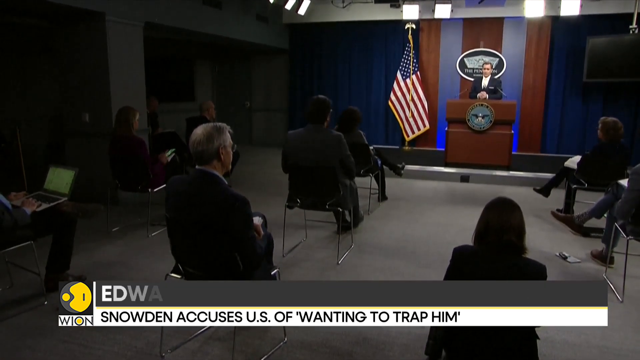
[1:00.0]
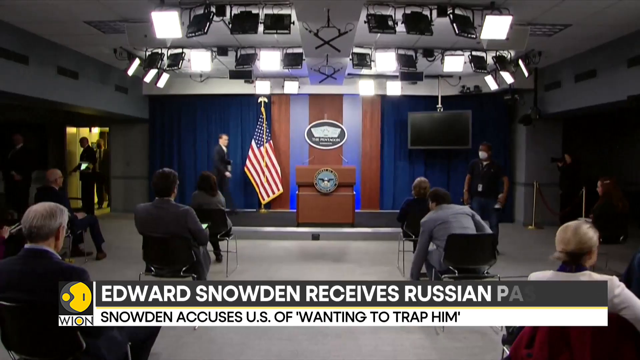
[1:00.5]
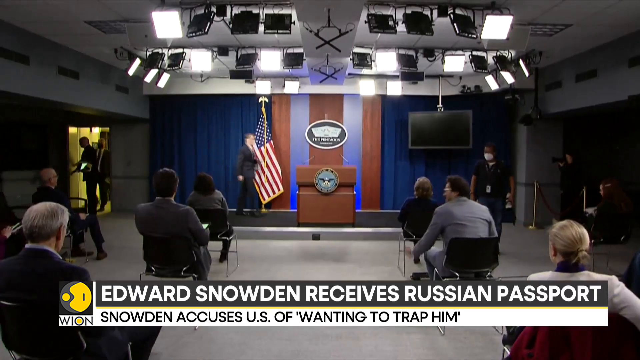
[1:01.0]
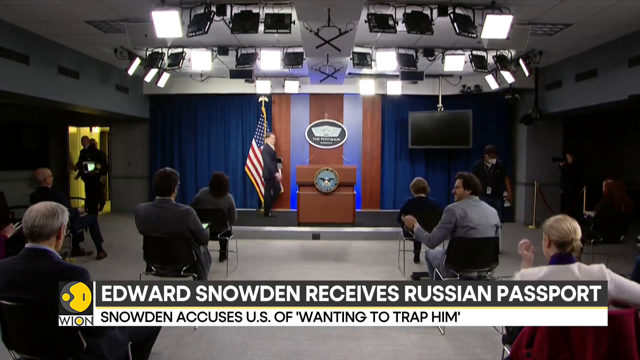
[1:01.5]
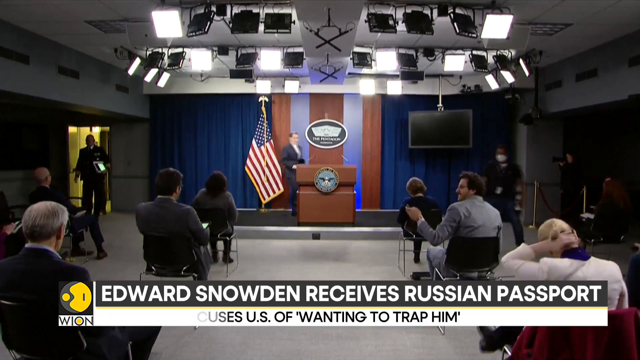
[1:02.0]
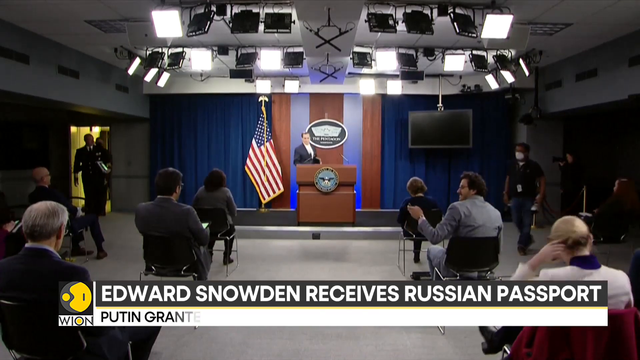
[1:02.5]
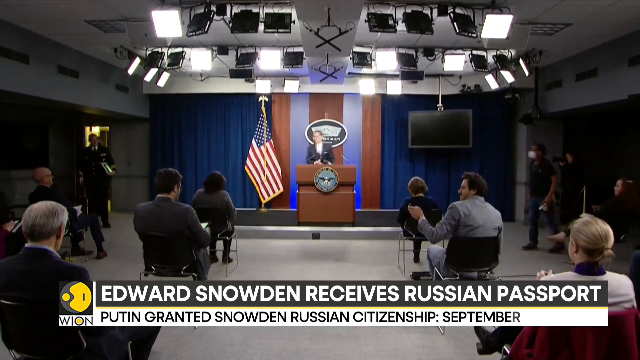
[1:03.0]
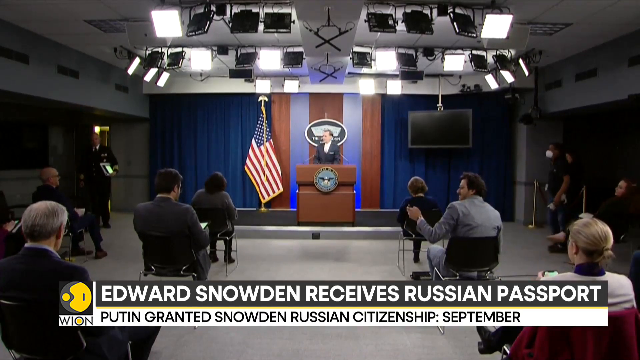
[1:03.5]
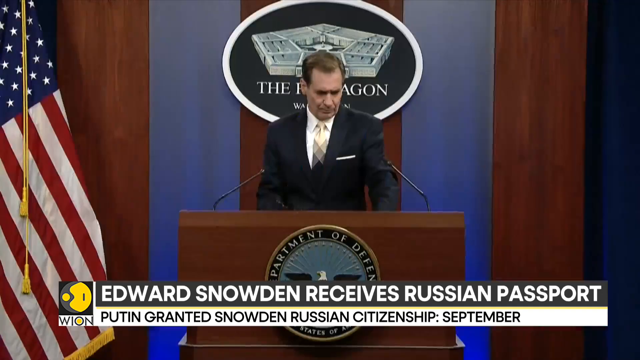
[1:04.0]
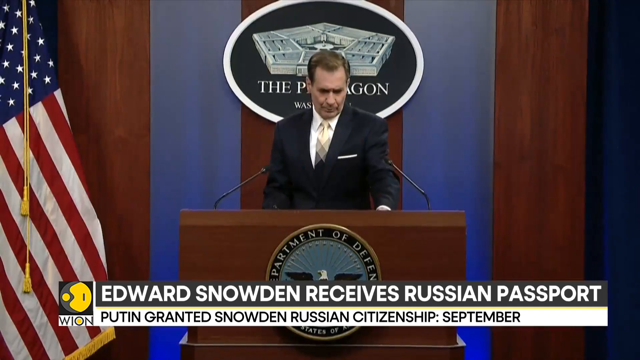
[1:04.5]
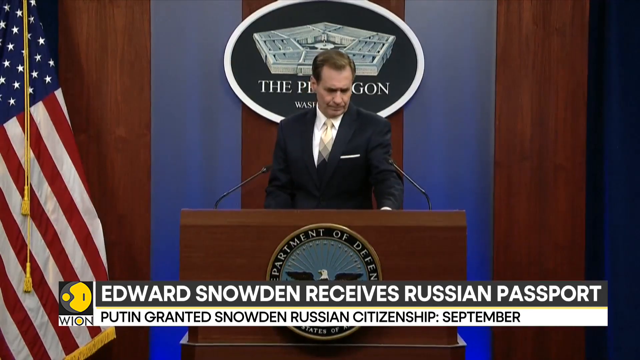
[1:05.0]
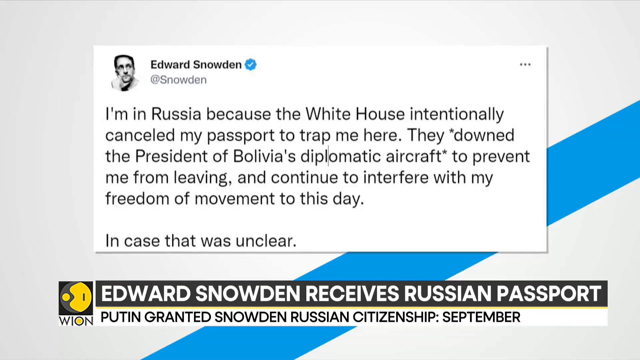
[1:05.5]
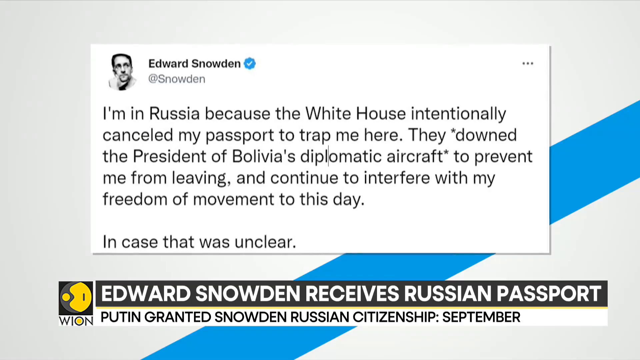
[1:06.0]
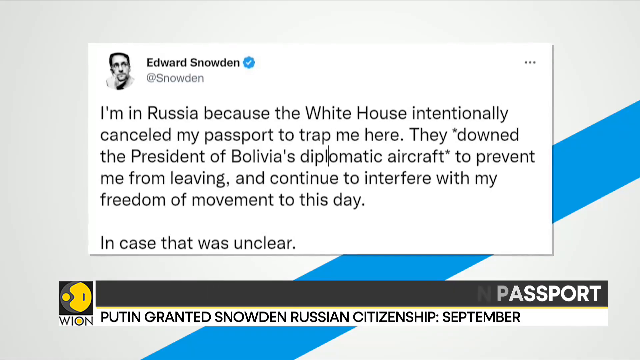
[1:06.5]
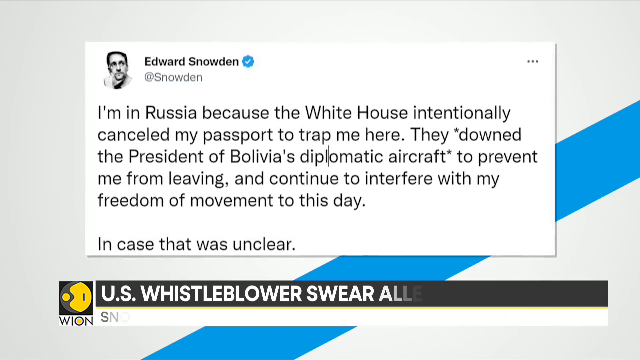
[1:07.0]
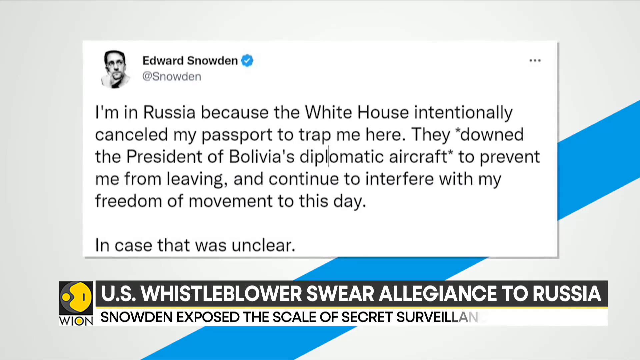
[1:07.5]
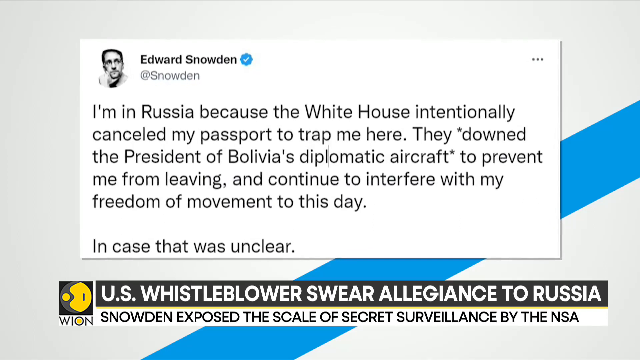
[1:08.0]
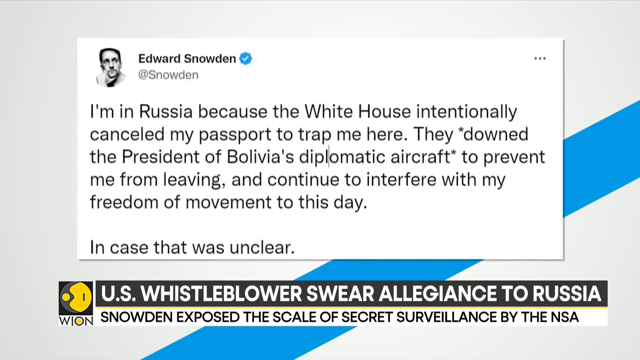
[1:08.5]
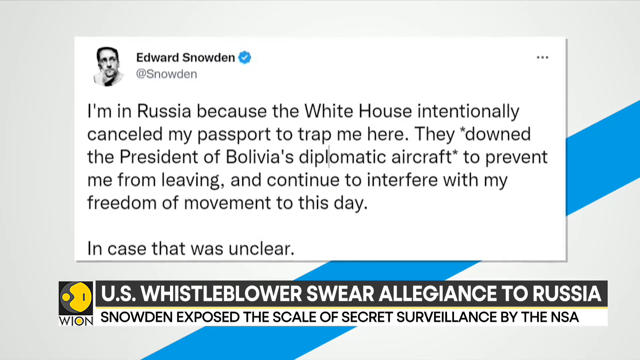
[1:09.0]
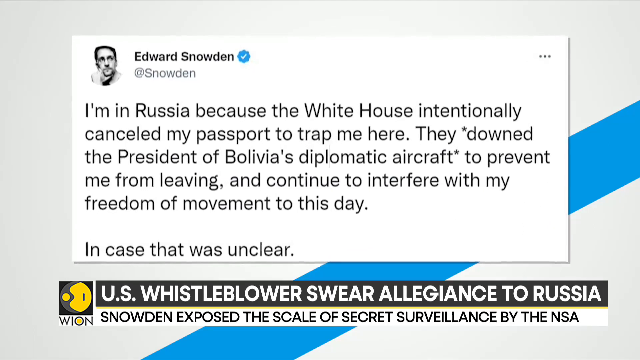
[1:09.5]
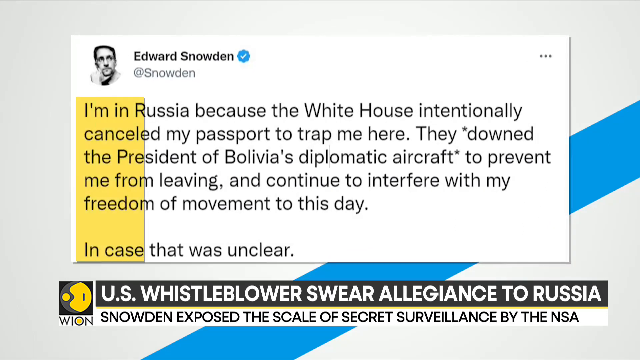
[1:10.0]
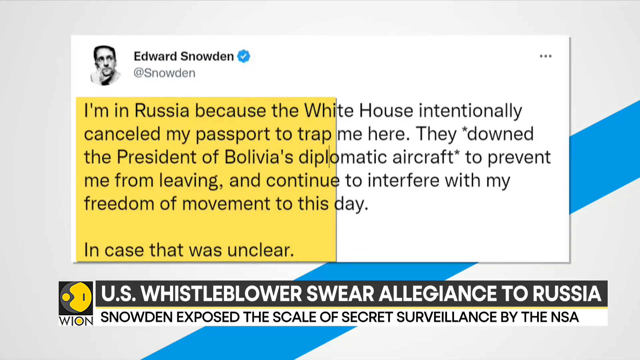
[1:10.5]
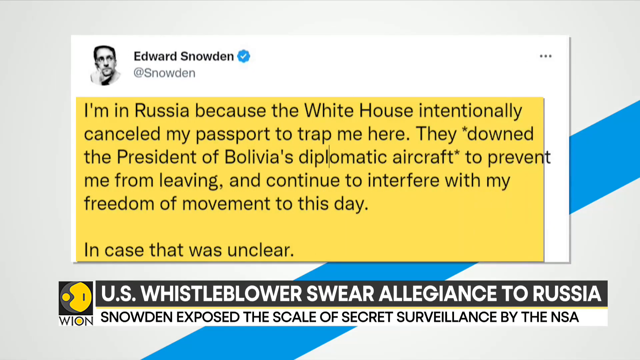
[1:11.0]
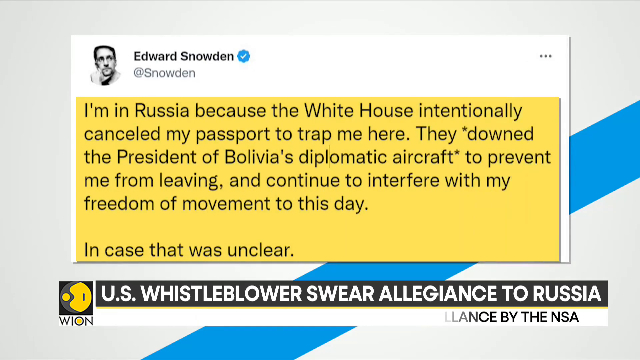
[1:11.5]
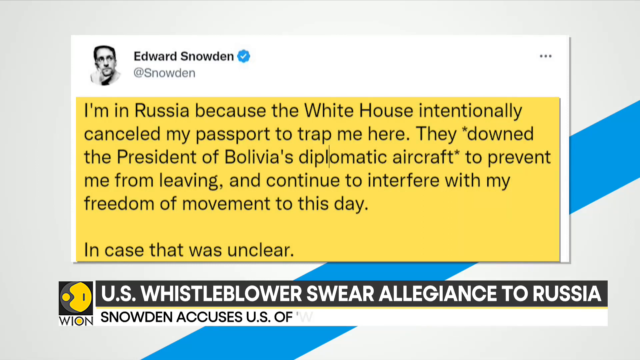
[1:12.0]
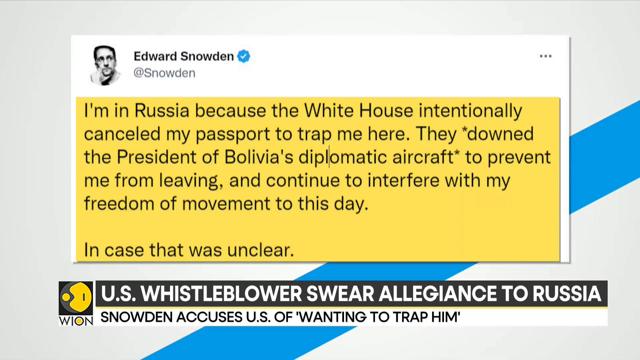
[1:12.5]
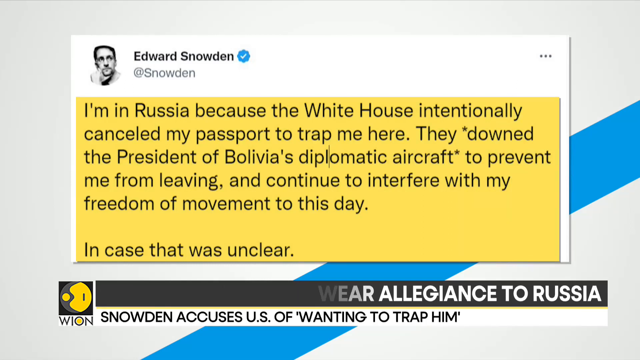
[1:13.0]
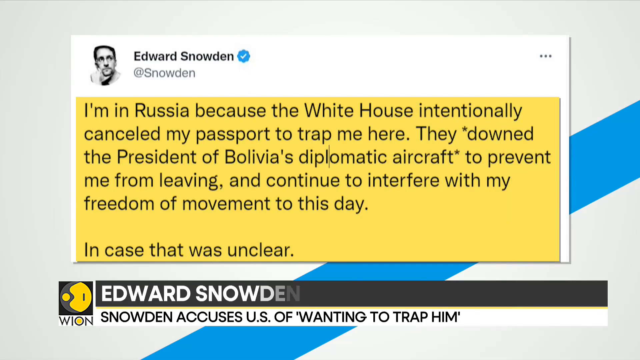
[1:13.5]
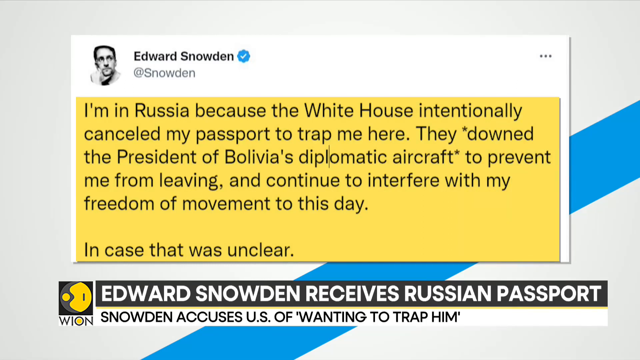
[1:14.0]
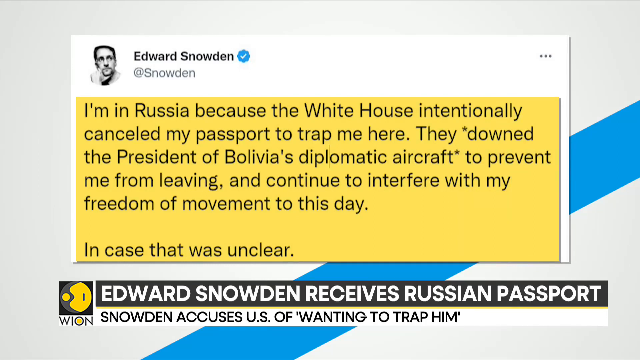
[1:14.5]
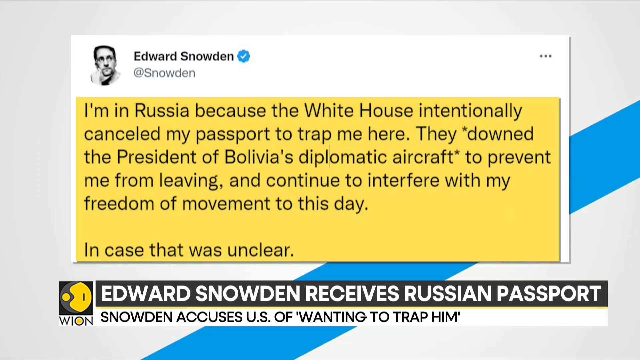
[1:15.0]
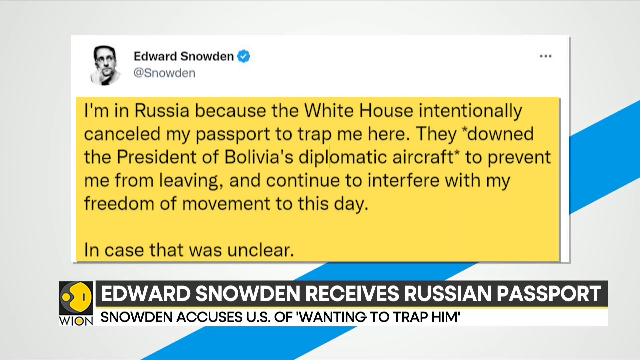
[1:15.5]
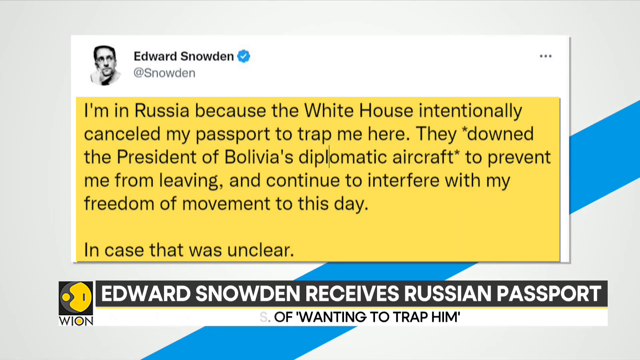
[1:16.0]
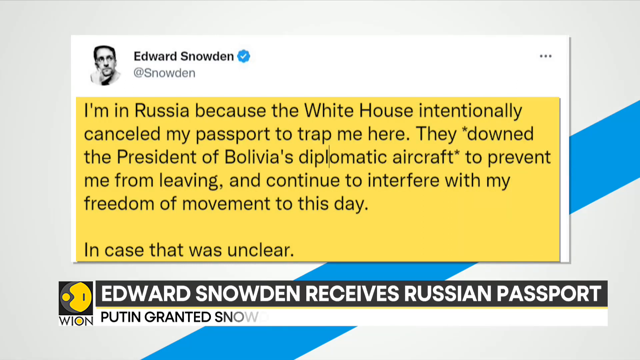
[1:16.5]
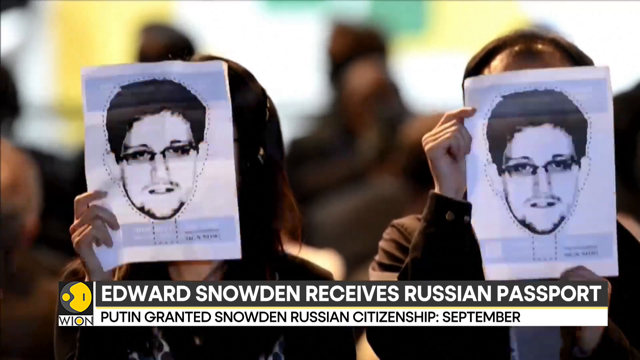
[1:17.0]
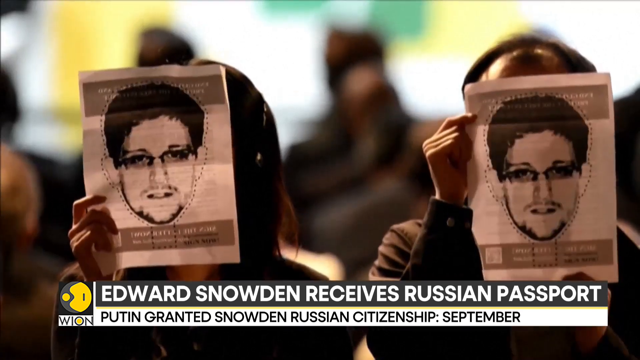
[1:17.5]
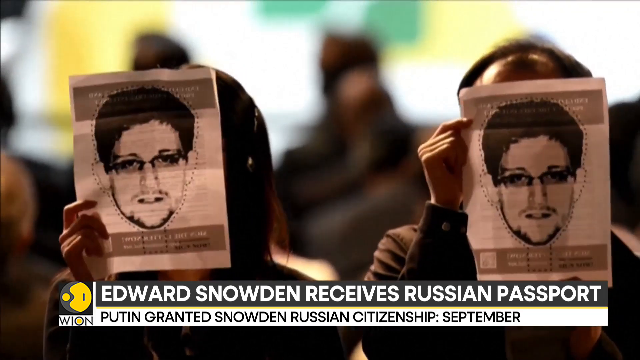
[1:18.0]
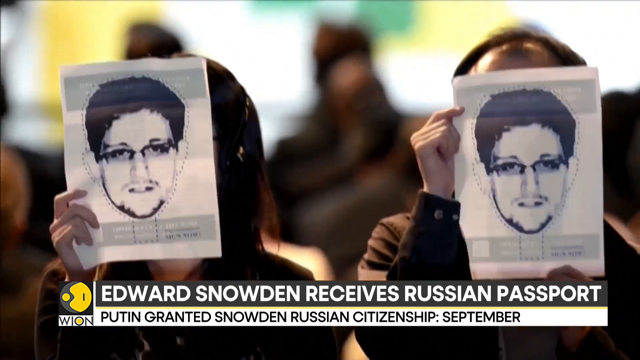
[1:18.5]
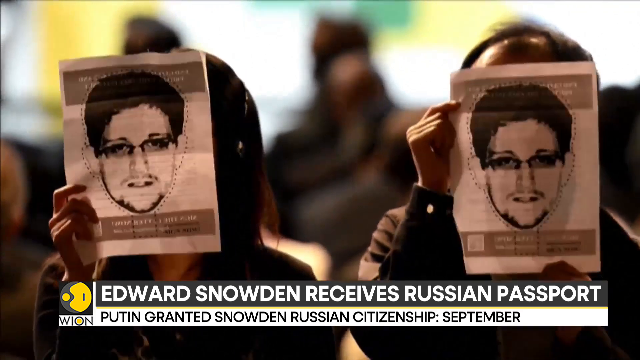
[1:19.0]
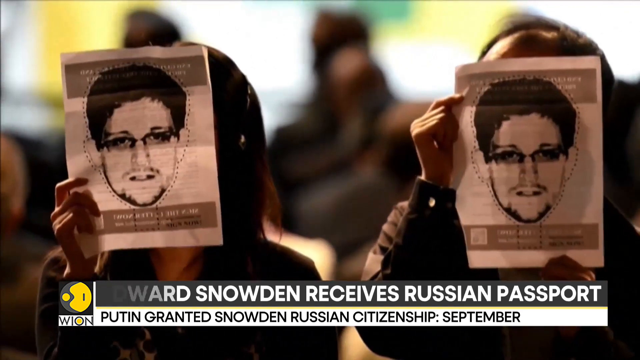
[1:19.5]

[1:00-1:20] A few masks are visible in the press room, and a person walks up to the podium. A post by Edward Snowden appears on screen, with no platform logo: "I'm in Russia because the White House intentionally canceled my passport to trap me here. They downed the president of Bolivia's diplomatic aircraft to prevent me from leaving and continue to interfere with my freedom of movement to this day, in case that was unclear." People are also shown holding up pictures of Snowden in front of their faces.